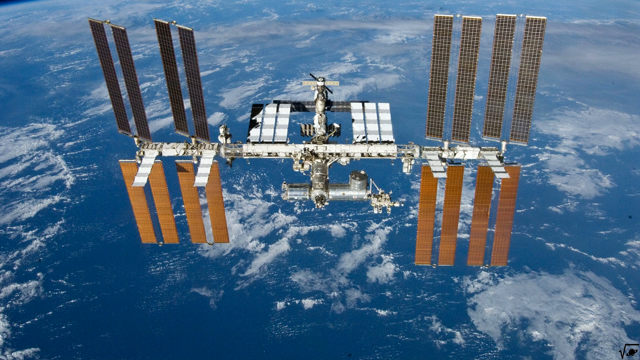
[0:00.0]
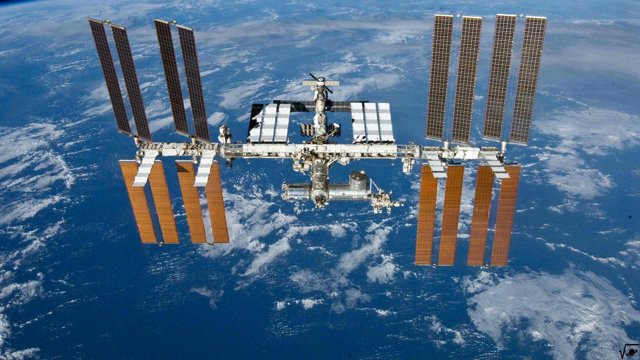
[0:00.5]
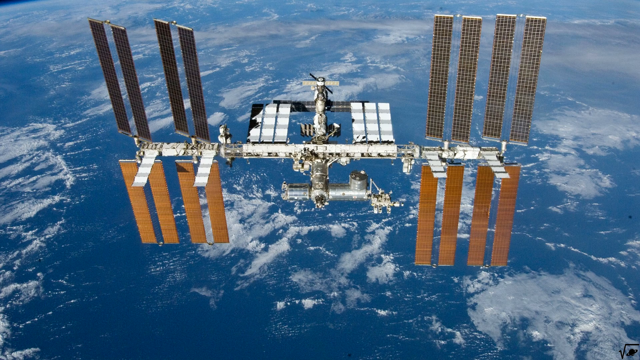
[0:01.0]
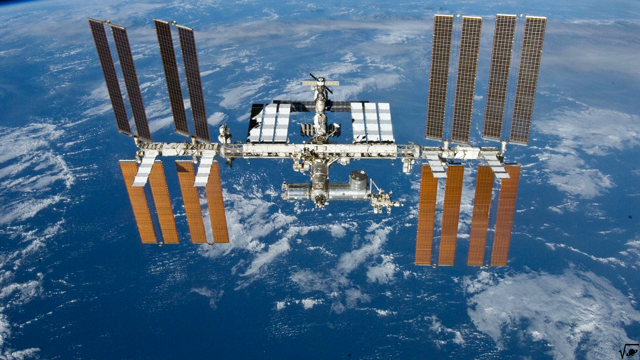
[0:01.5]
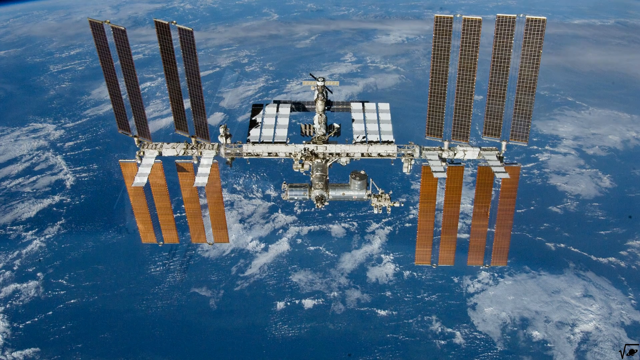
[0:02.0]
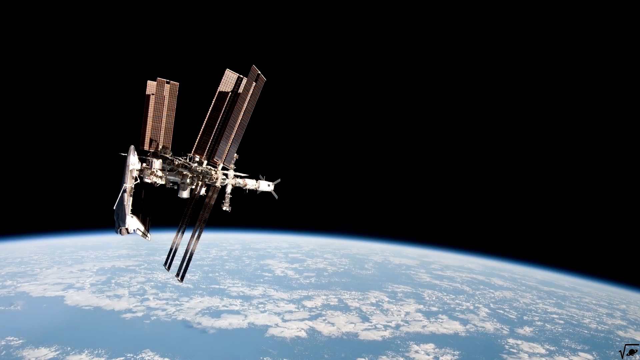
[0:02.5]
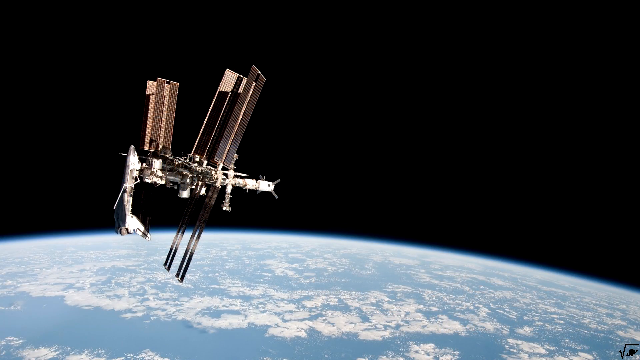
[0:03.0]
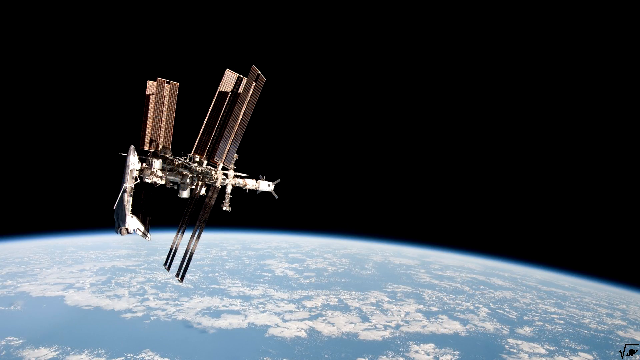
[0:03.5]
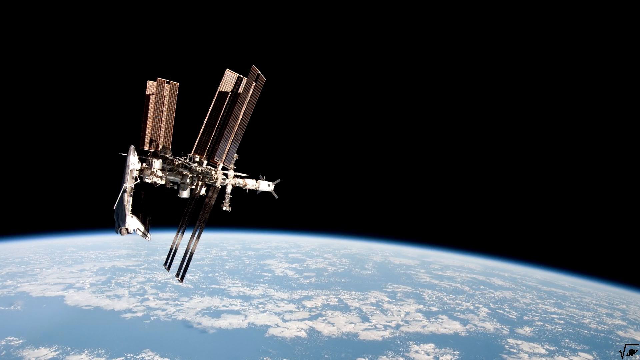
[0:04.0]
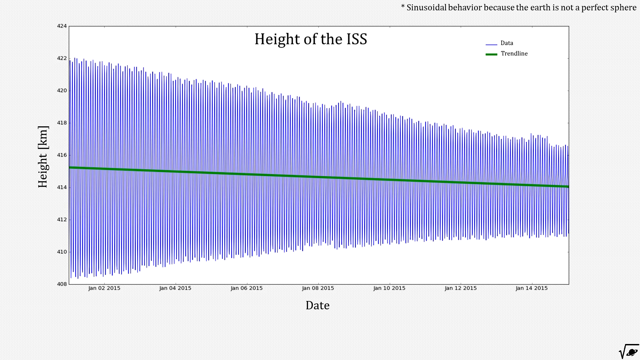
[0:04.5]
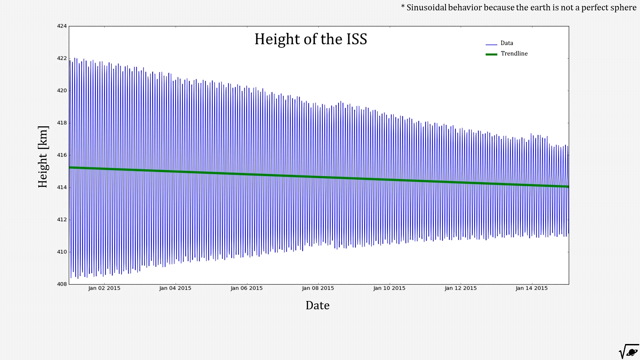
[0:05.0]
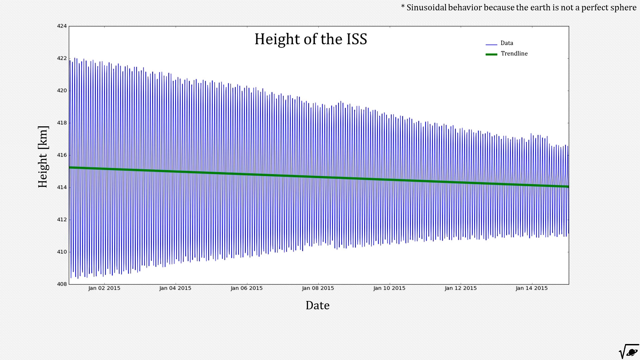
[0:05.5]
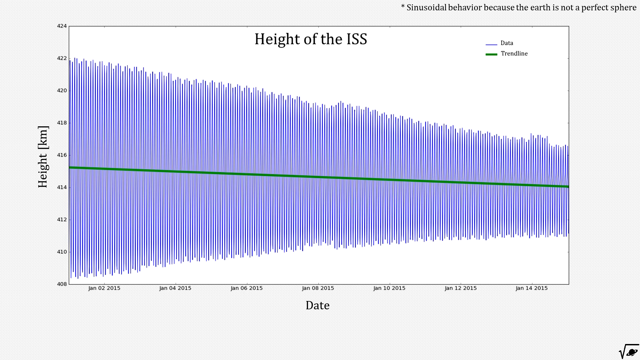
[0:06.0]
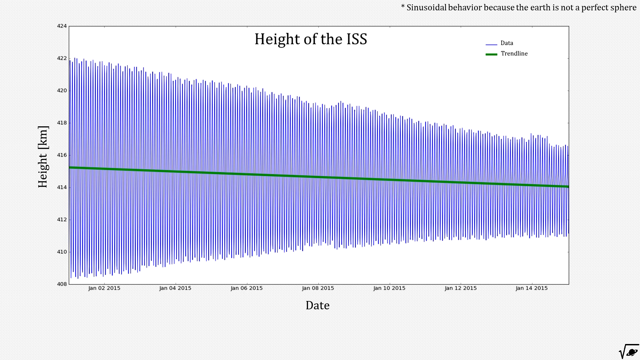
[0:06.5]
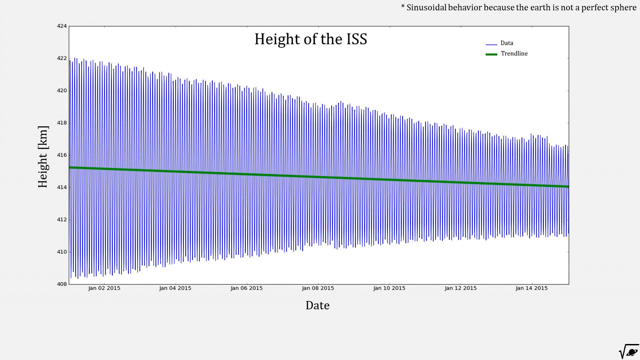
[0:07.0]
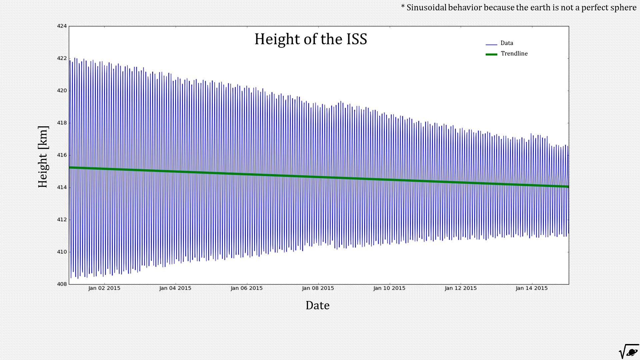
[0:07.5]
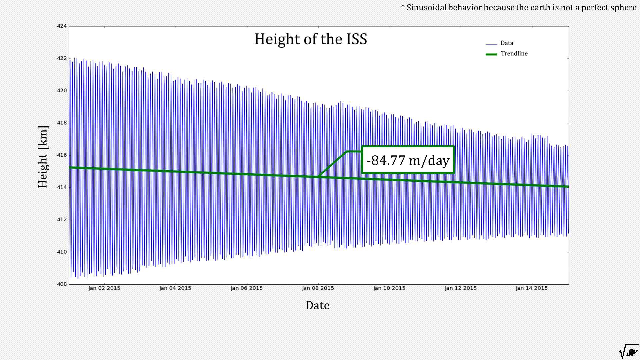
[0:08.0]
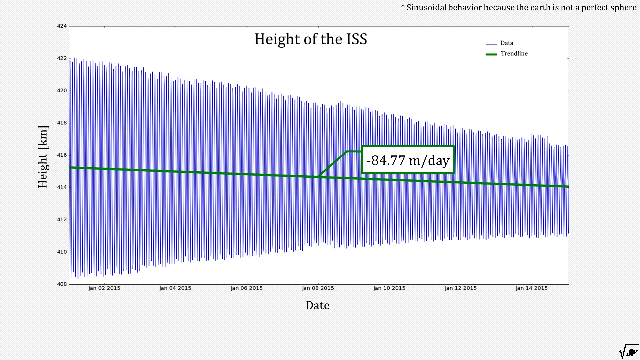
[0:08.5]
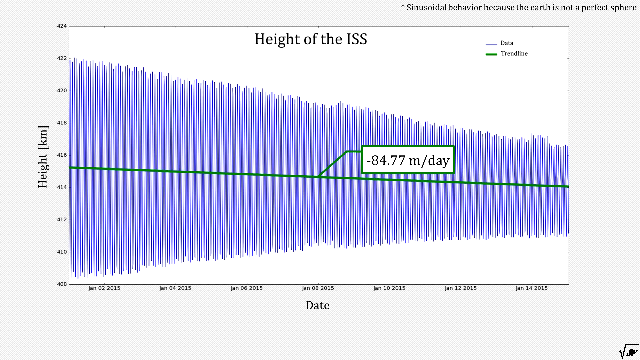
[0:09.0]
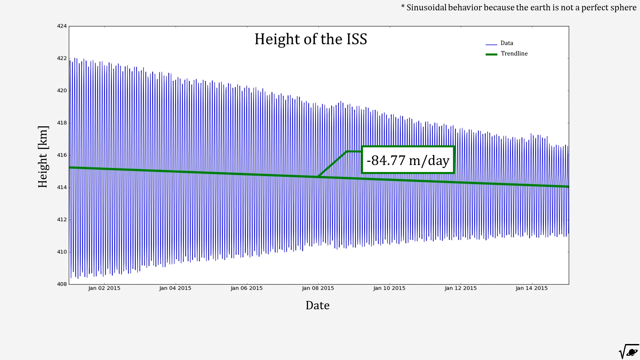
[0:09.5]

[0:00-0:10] A satellite is shown with rectangular bars that go up and down on it, making a shape like a wide H. It is above the earth, where the water is blue. The satellite is then seen from a different angle. A chart pops up in the upper right-hand corner with the text "sinusoidal behavior because the earth is not a perfect sphere" and "height of ISS". The y-axis is labeled "height" in kilometers and the x-axis "date". A purple line on the chart changes across it, and one label shows a value of minus 84.77 per day.